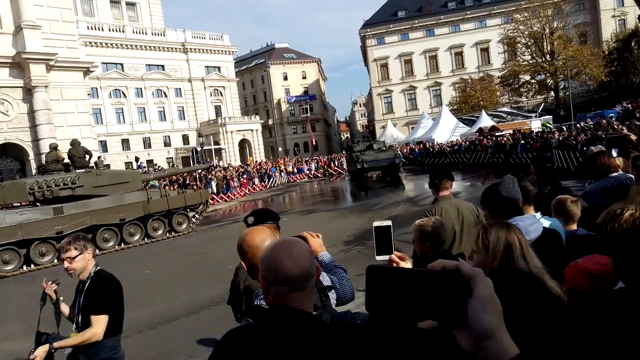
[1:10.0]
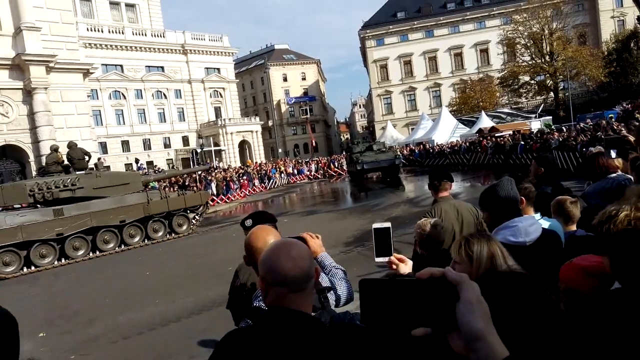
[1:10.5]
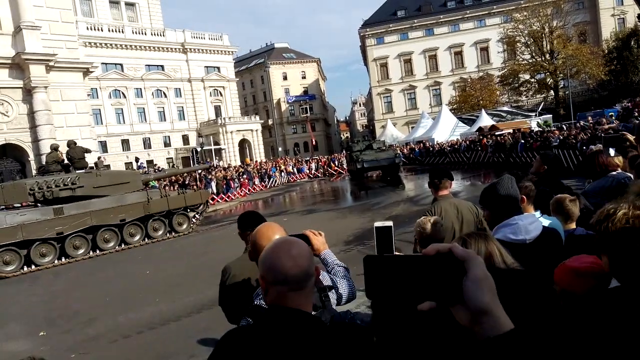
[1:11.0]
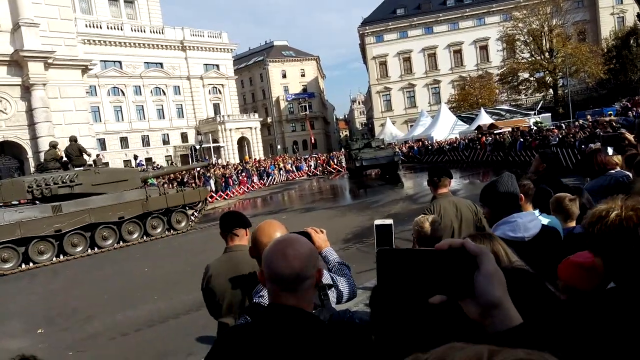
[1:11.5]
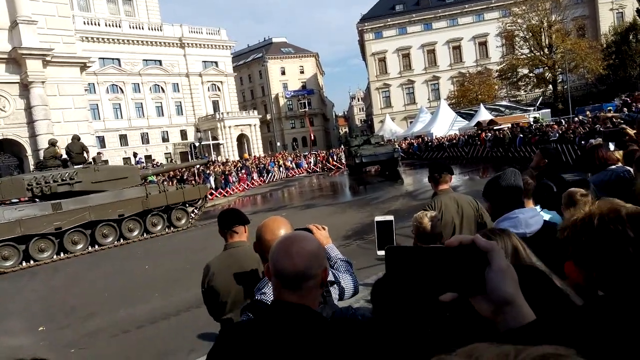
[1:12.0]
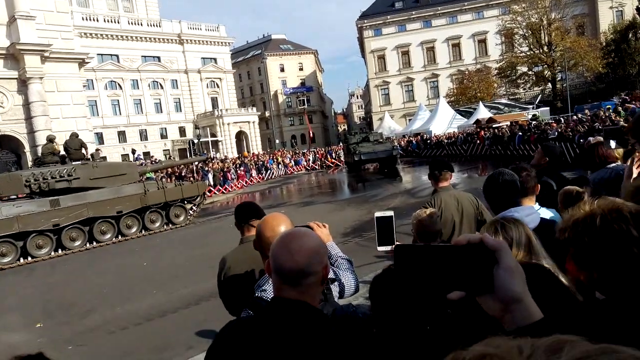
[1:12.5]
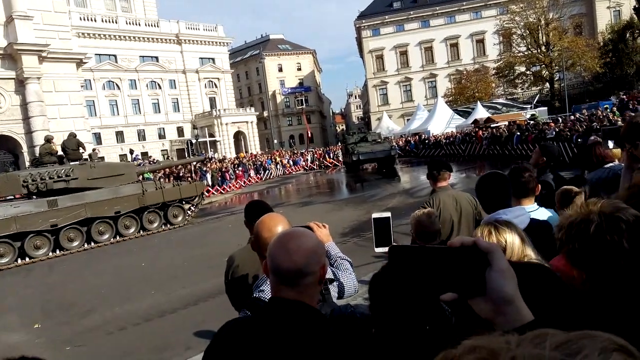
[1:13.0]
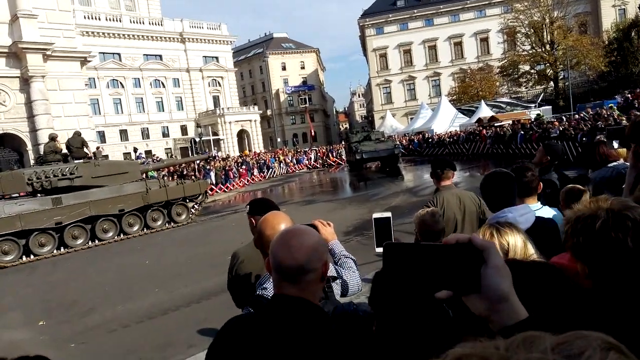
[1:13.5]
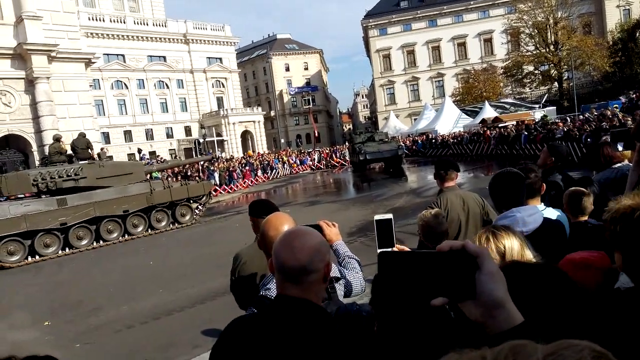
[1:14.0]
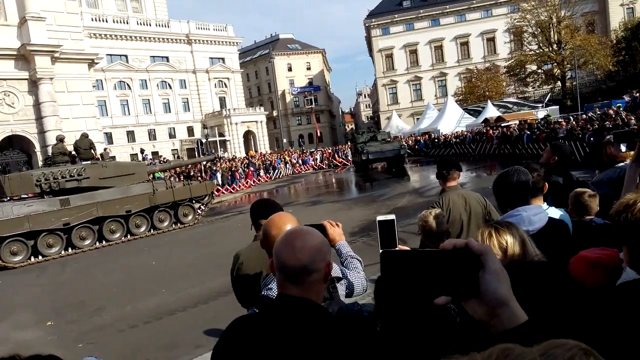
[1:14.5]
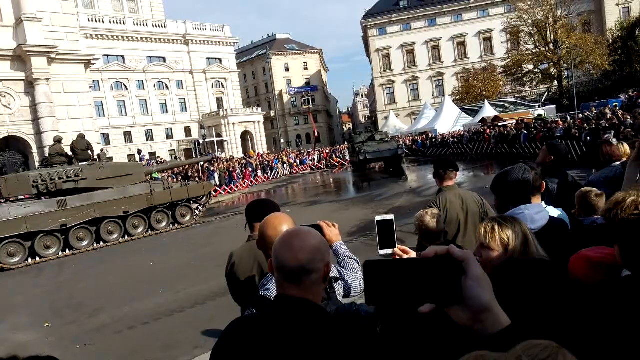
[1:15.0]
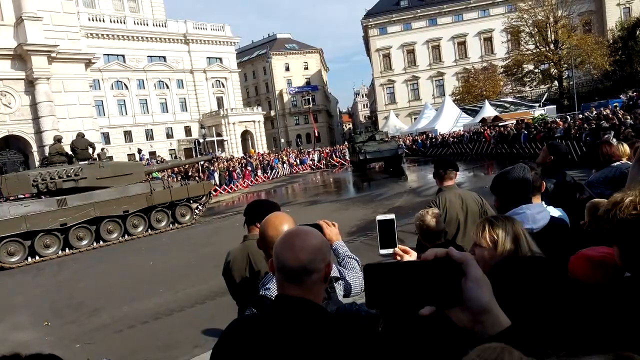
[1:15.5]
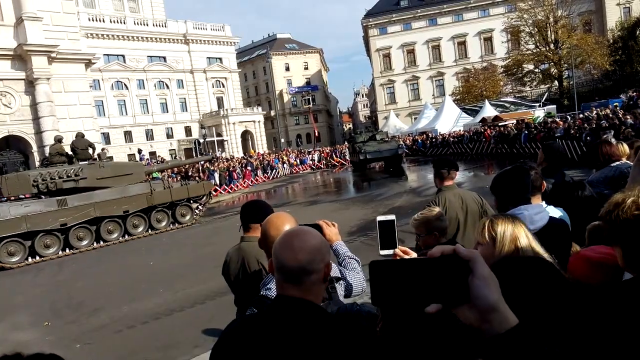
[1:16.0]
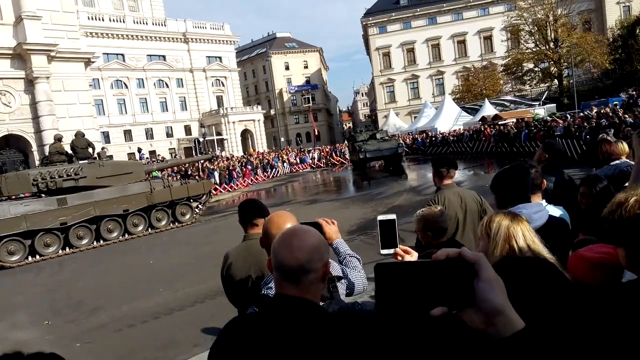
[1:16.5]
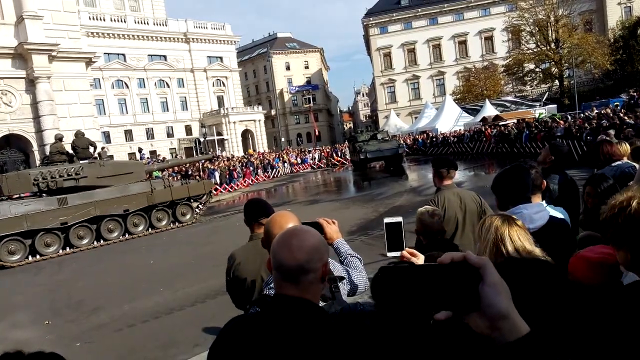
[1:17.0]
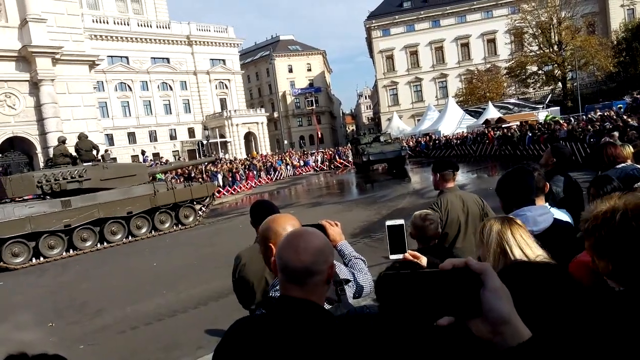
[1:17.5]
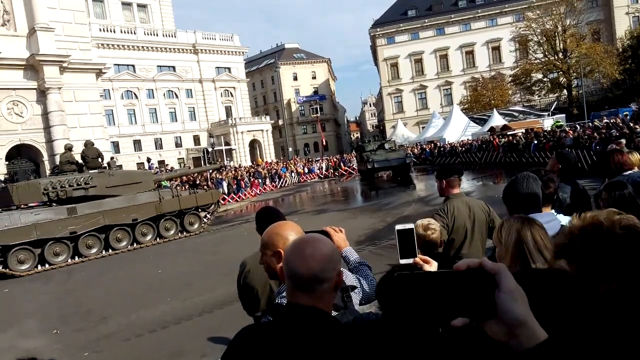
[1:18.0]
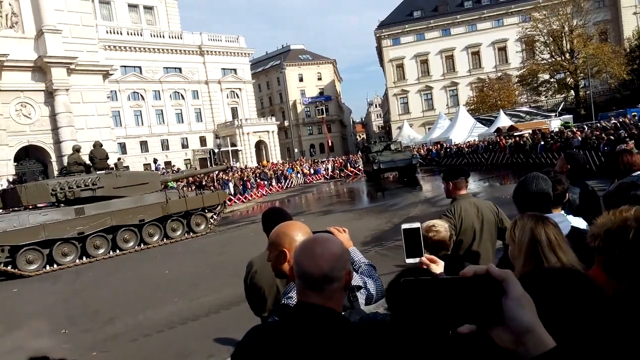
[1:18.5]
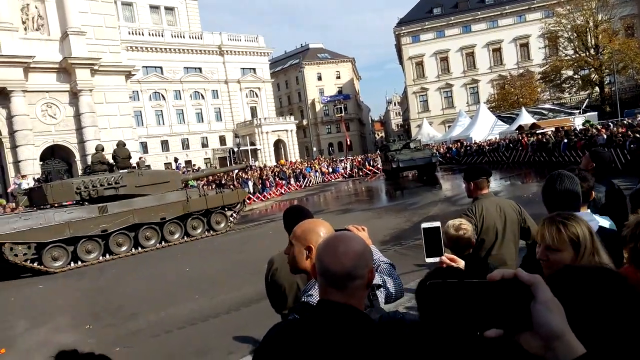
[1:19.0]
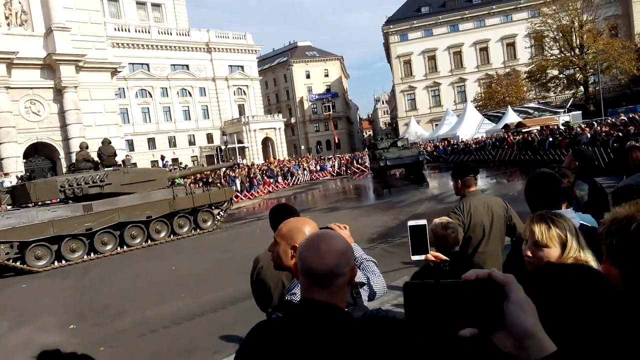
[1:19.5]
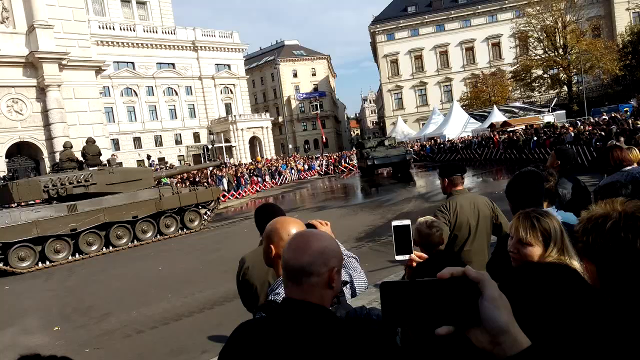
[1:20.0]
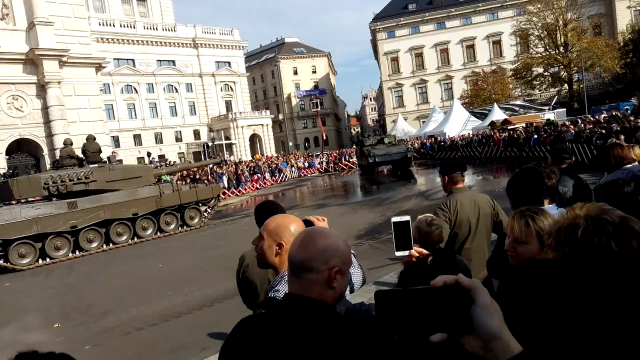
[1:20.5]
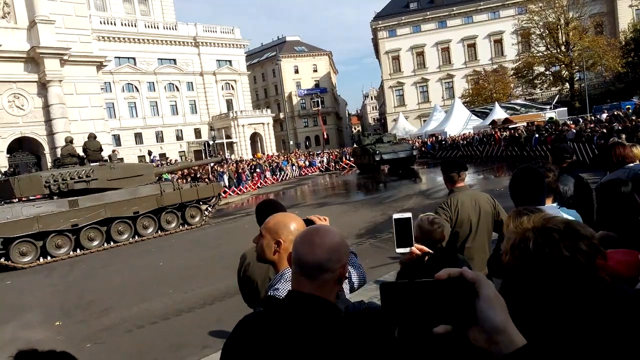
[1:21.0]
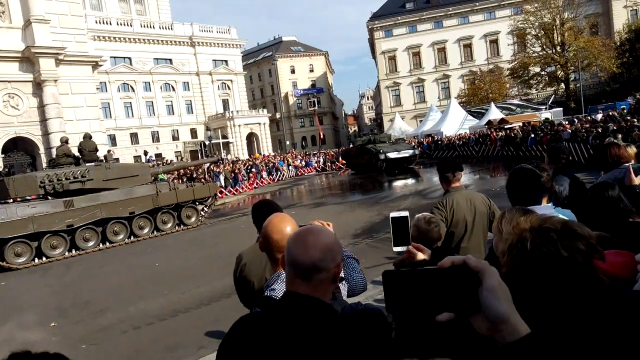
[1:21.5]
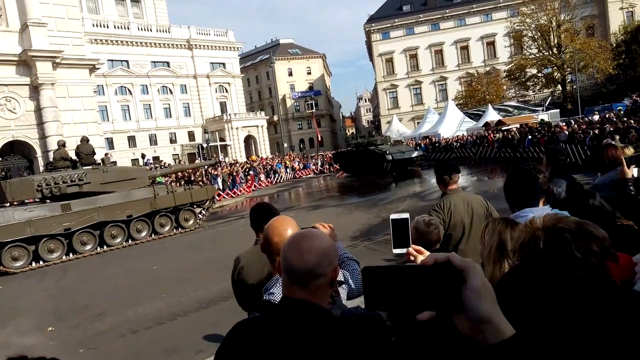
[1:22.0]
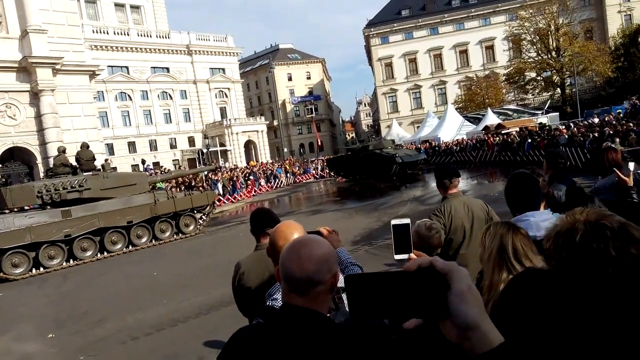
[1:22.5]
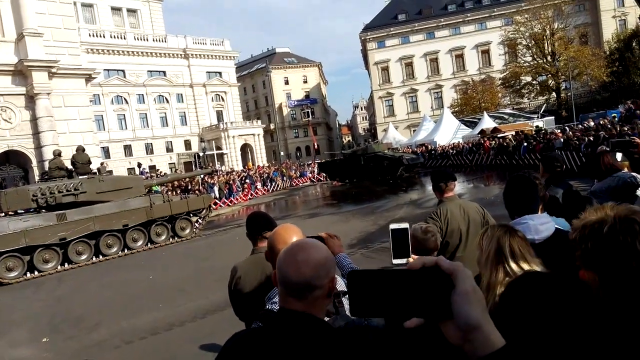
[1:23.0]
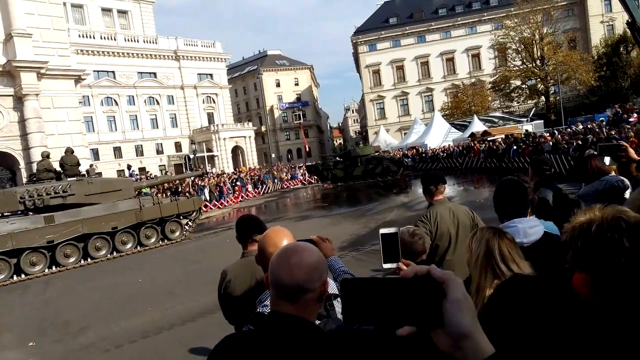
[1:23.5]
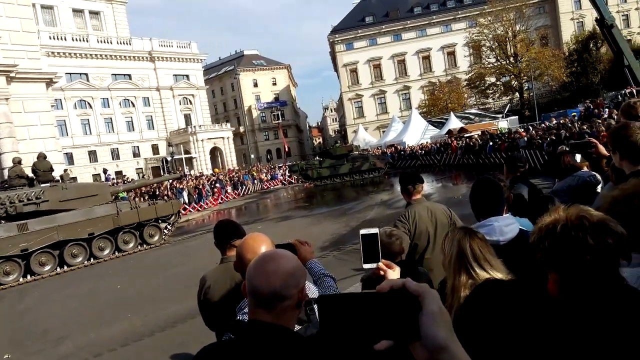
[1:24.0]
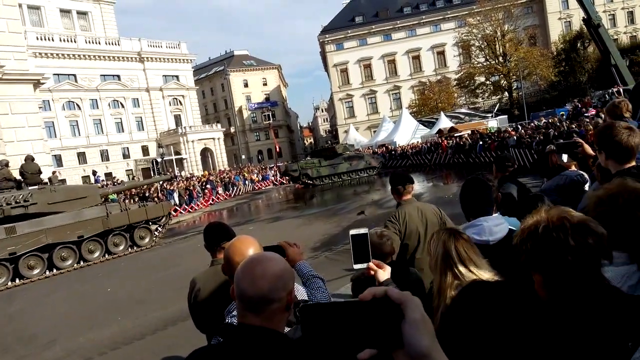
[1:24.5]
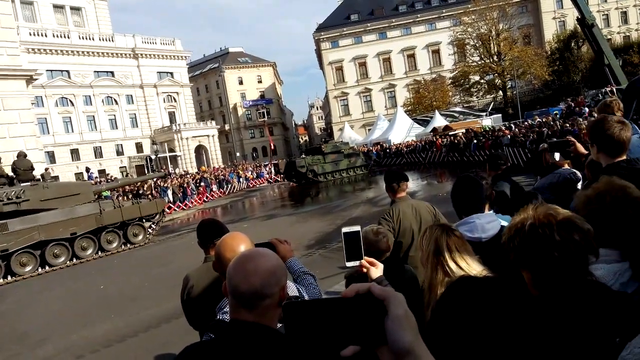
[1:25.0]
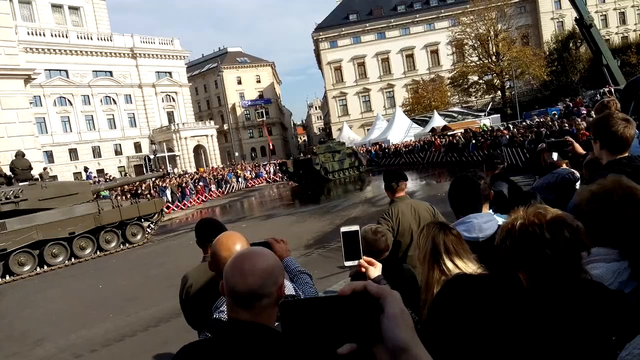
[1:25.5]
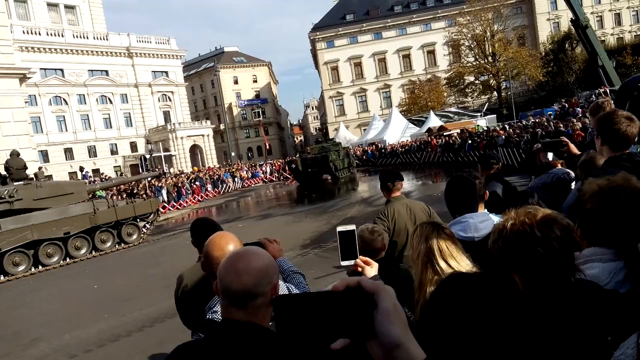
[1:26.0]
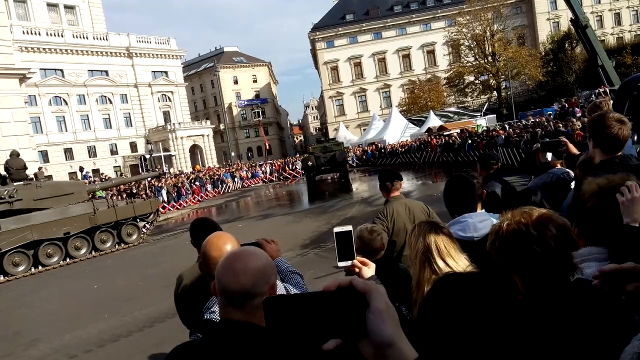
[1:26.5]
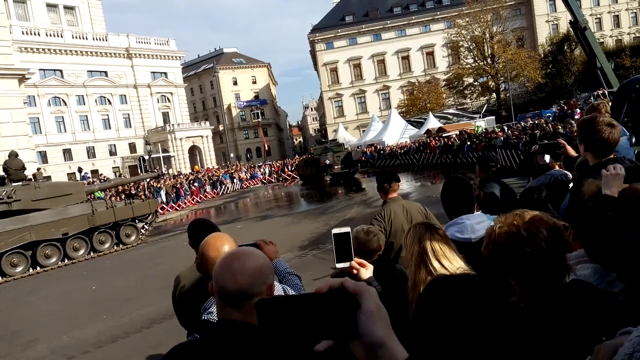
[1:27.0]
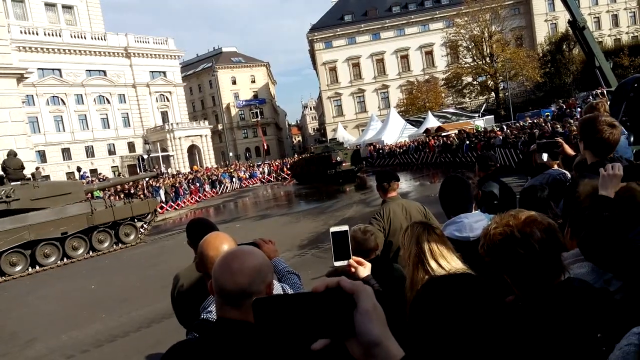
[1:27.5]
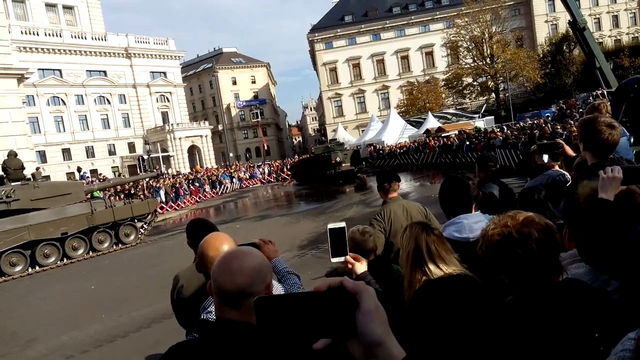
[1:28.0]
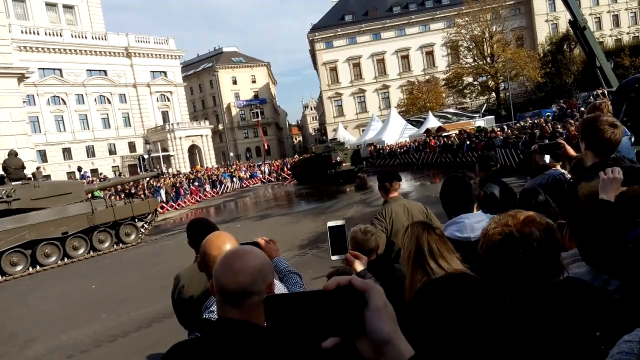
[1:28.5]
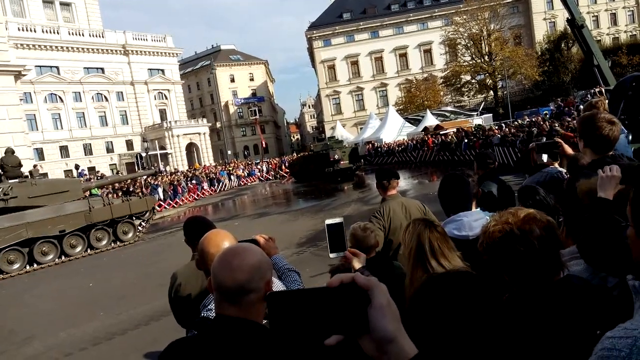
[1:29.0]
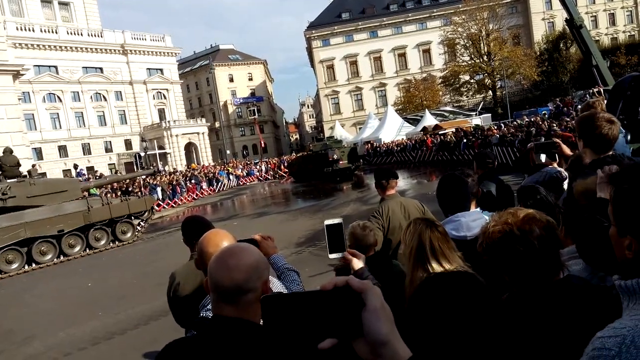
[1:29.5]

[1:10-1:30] Less is happening in the same parade ground. There are still two tanks and a crowd of people watching, marshalled in the foreground by two soldiers wearing black berets. The tank that has been the main focus is back at the end of the parade ground on top of the slick surface. After a pause of several seconds, people's phones are redirected towards this tank, and shortly afterwards it begins to pivot on the same spot again, going round and round. The other tank on the left side of the frame is still stationary, with two soldiers on top of it. A closer shot then shows the person who moved away from the crowd carrying some sort of photography equipment: a young white adult man wearing glasses and with a beard, his face now much clearer.